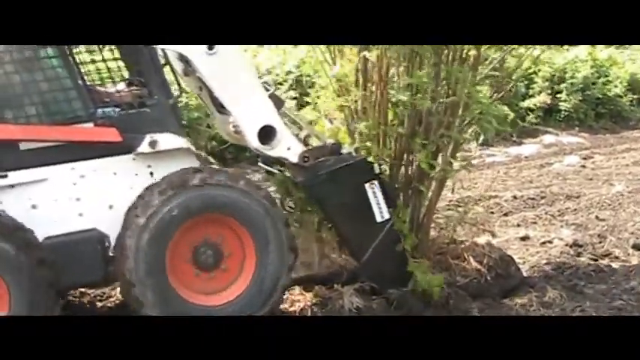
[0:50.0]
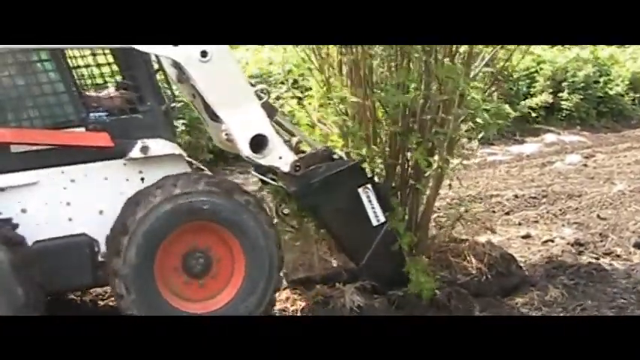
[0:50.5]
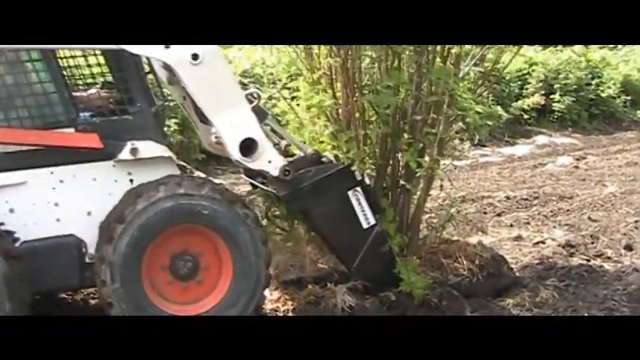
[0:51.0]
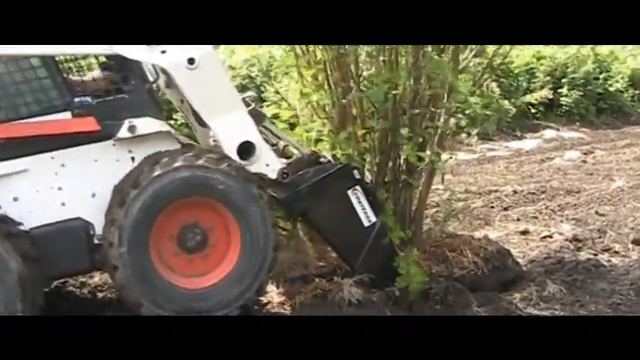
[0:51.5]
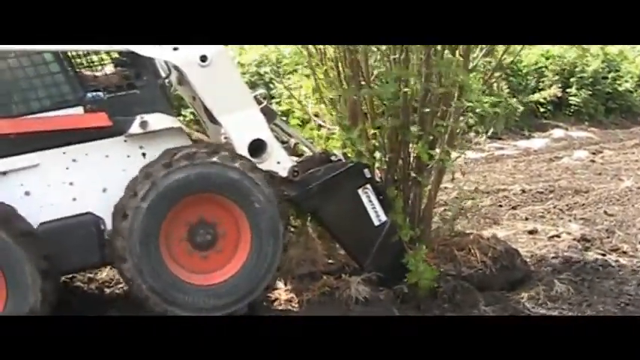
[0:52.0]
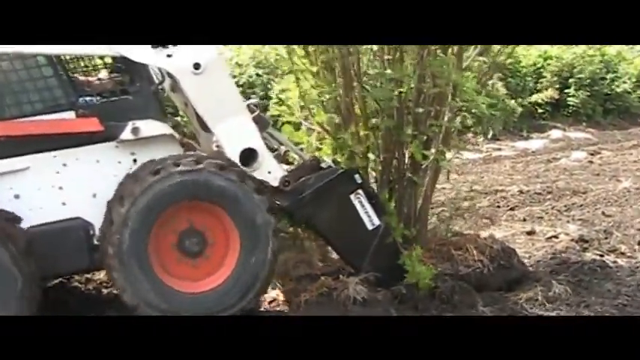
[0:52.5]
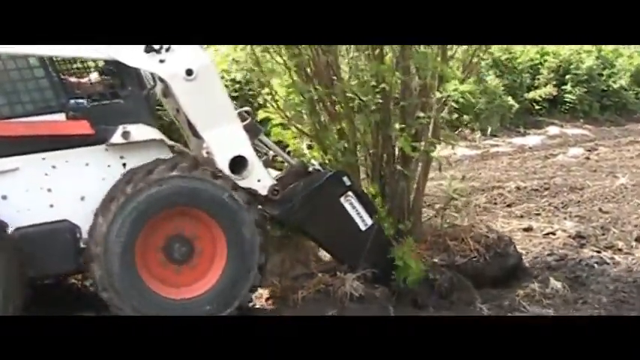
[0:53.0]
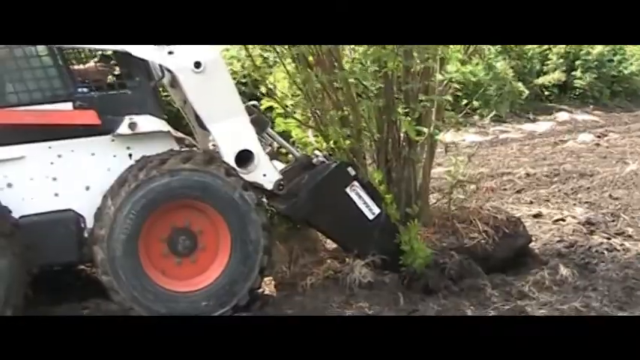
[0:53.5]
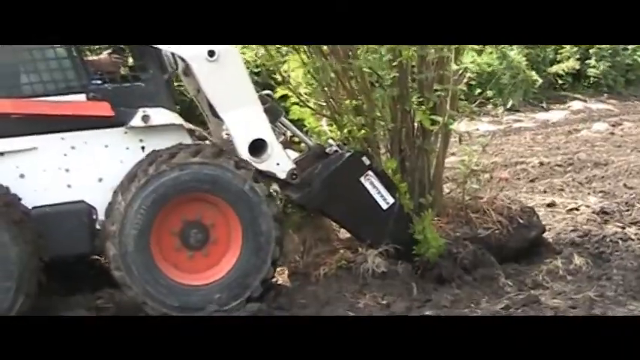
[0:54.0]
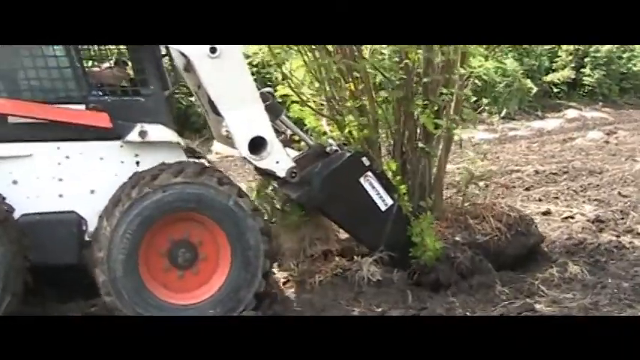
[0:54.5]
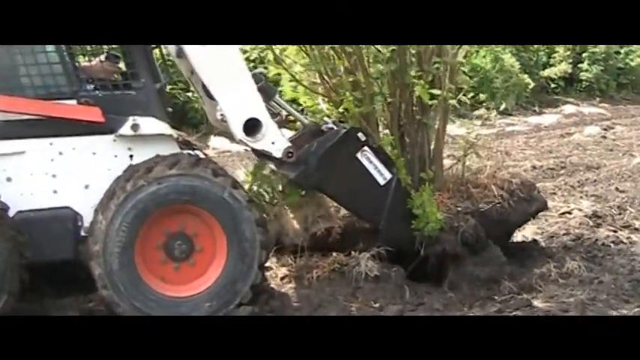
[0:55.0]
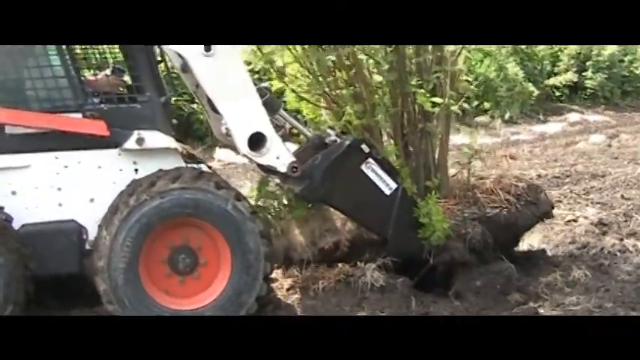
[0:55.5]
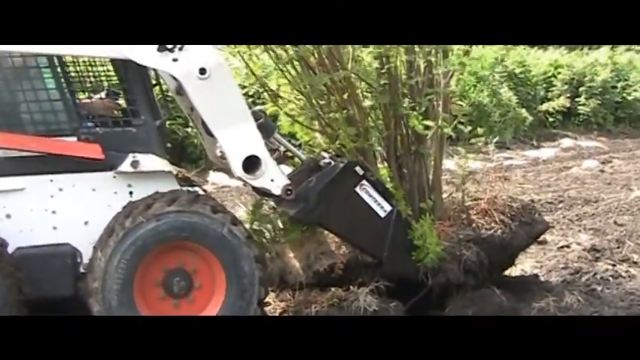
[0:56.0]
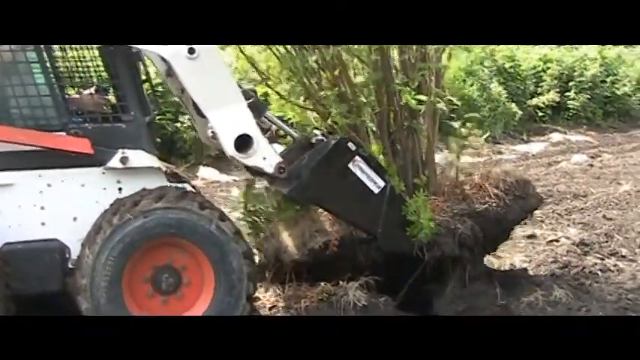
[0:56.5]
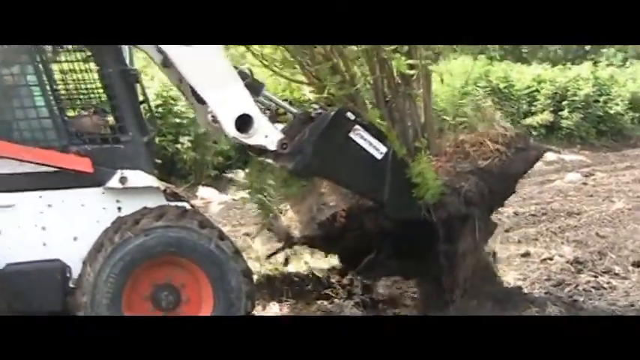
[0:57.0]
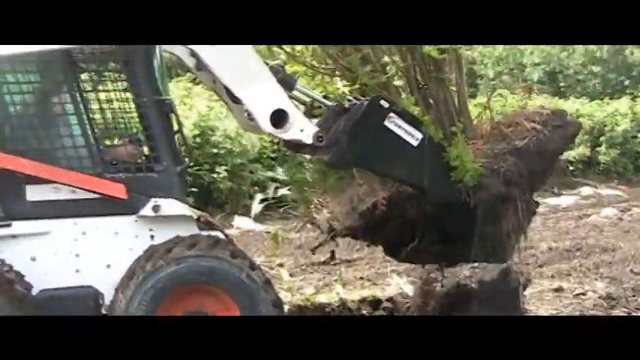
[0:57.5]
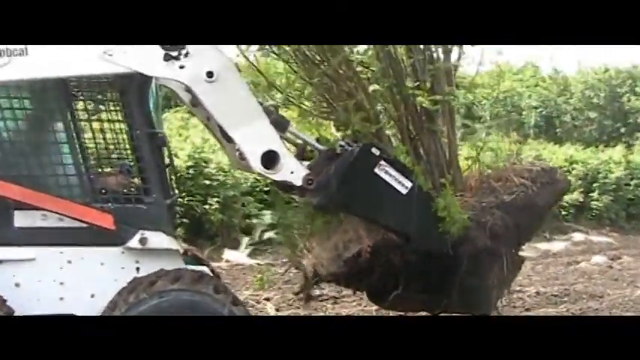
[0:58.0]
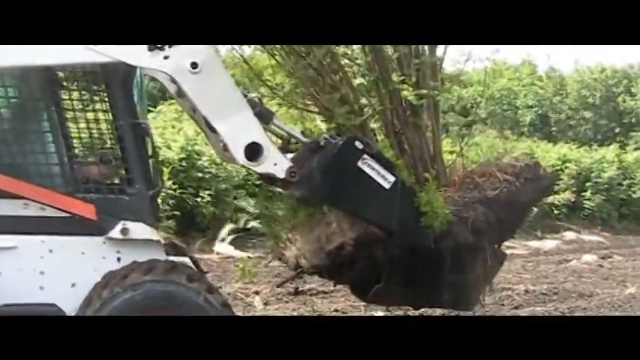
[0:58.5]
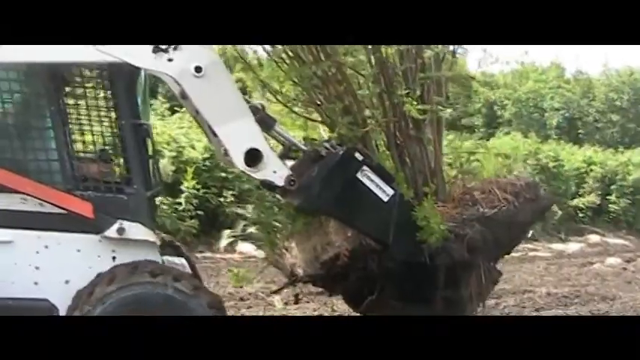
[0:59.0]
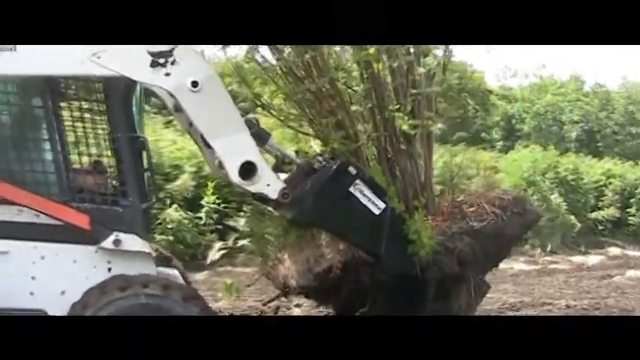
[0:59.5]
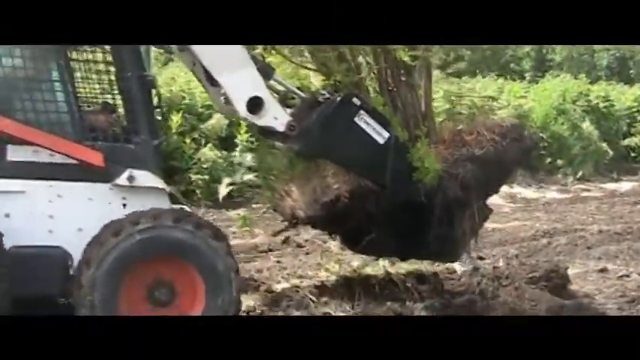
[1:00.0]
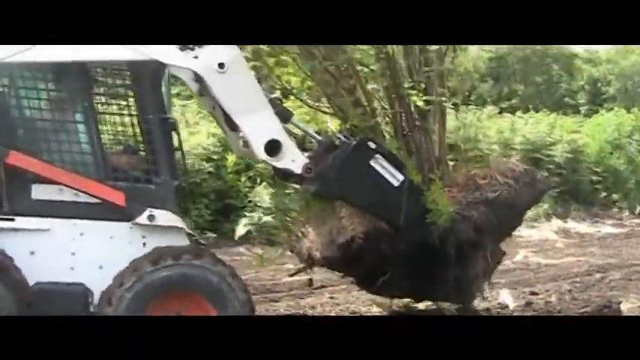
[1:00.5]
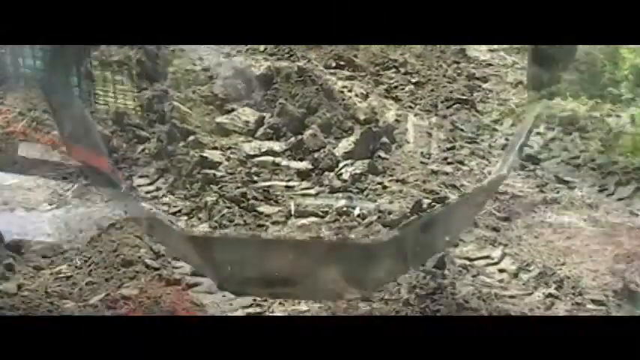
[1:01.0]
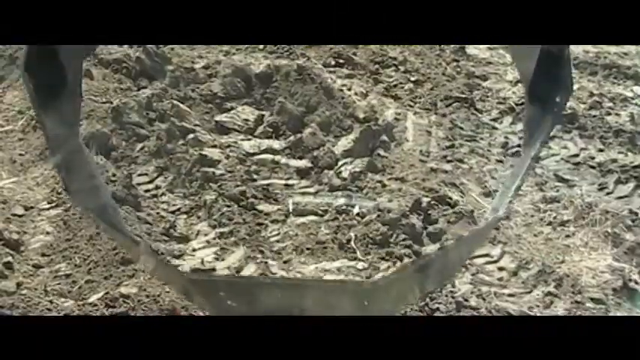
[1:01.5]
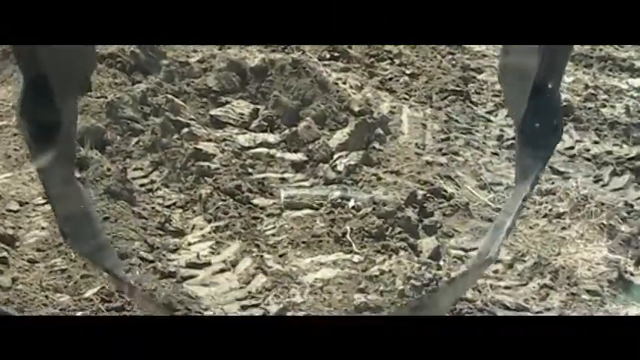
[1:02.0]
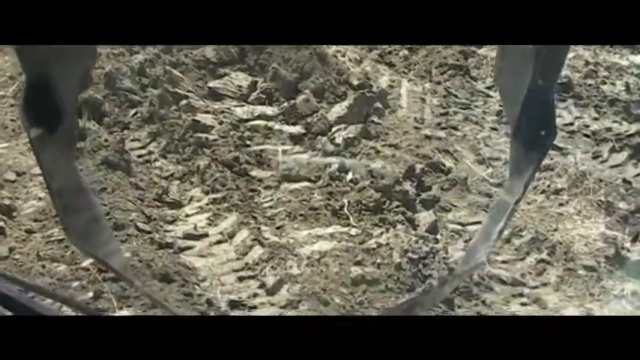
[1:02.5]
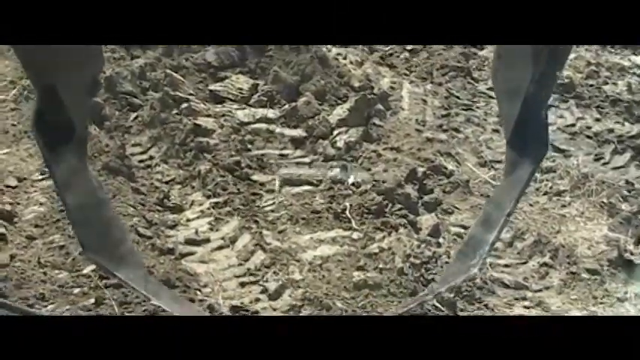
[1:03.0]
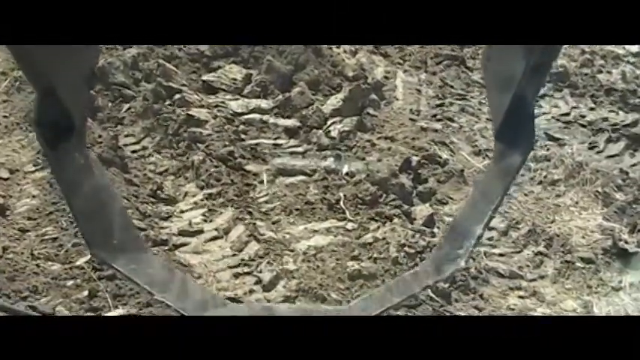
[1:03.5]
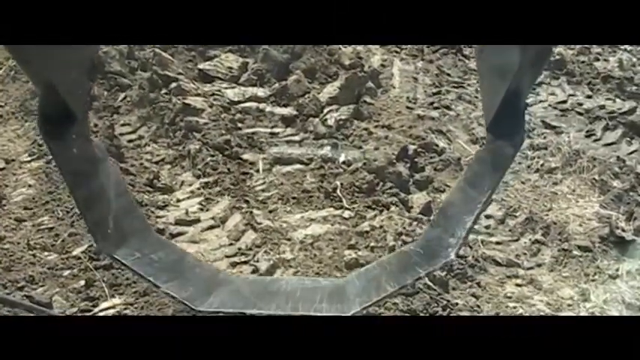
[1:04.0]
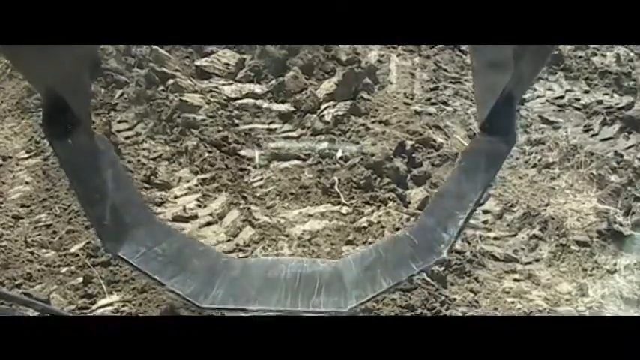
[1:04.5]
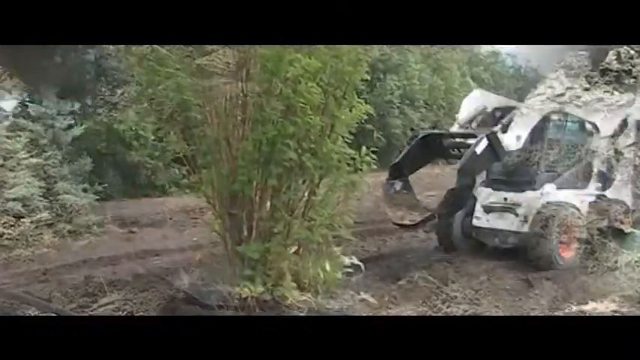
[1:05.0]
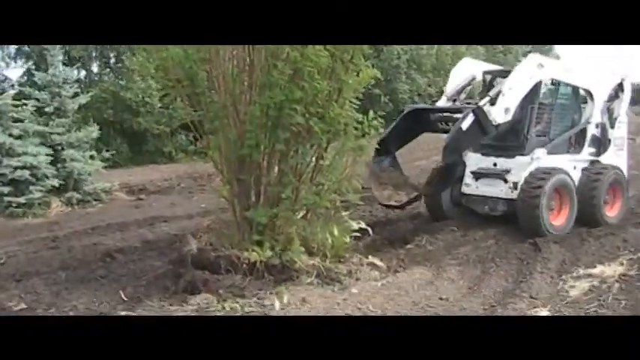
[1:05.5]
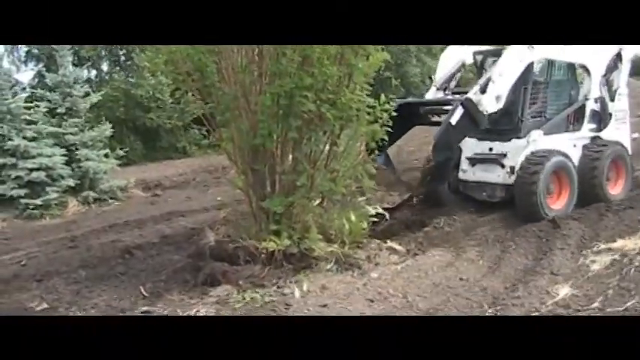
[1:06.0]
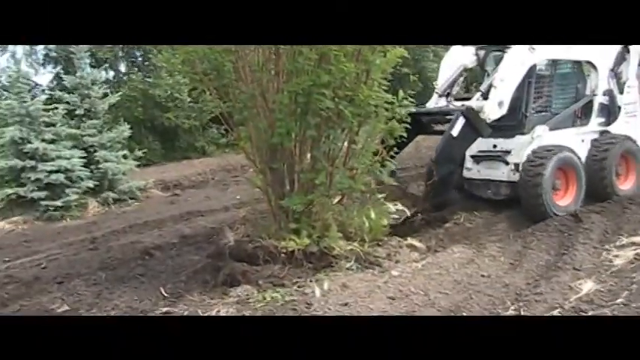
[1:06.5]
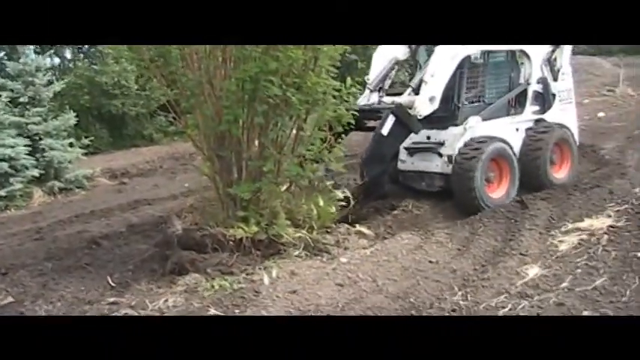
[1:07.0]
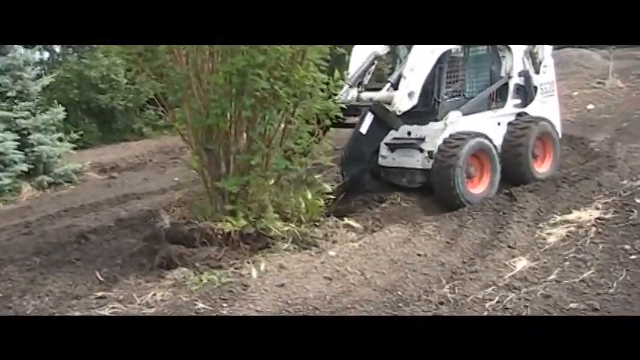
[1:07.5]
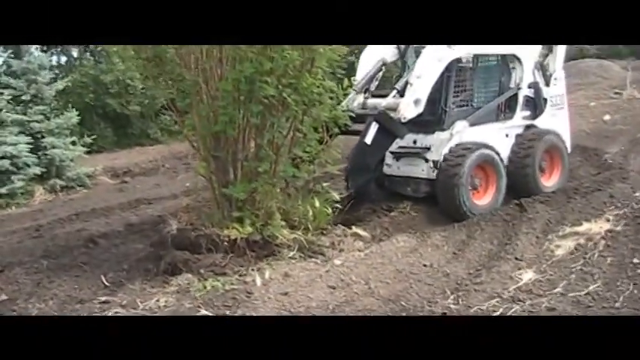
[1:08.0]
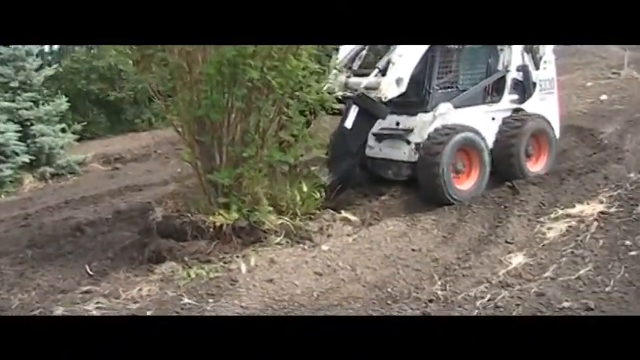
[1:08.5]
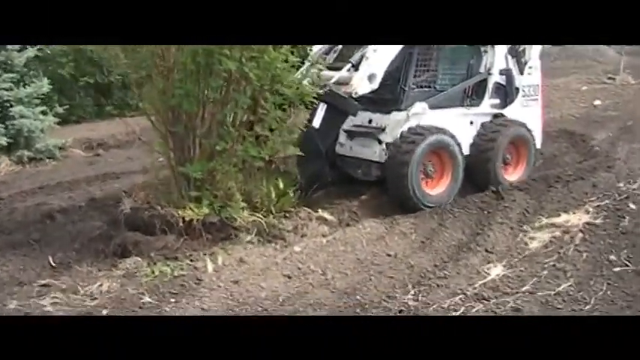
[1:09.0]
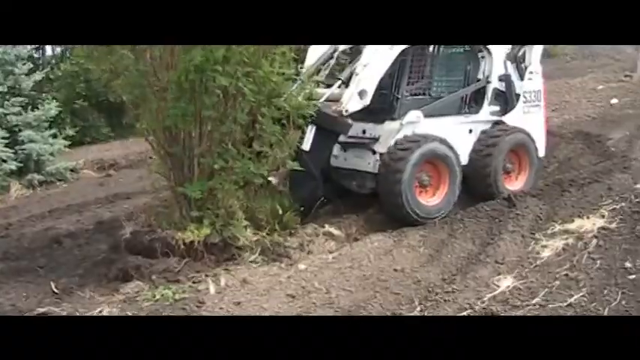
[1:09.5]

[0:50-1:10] The white machinery goes around the tree with the tree shovel, trying to pry it out of the ground, moving back and forth and lifting up. It finally picks the tree up out of the ground, showing the roots and a big chunk of grass with little bundles of trees. The tree shovel then scoops another set of trees out of the ground. The white machine drives through a clearing of dirt toward another bundle of tree shrubbery on the ground that it tries to pick up. An angle on the scoop shows what it looks like and how it functions. The machine drives up; it has orange inner tires with black tires, a body that is pretty much all white, black attachments with some orange throughout, and a cage on the outside.